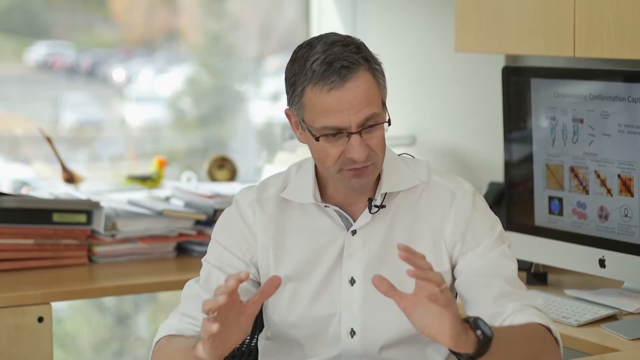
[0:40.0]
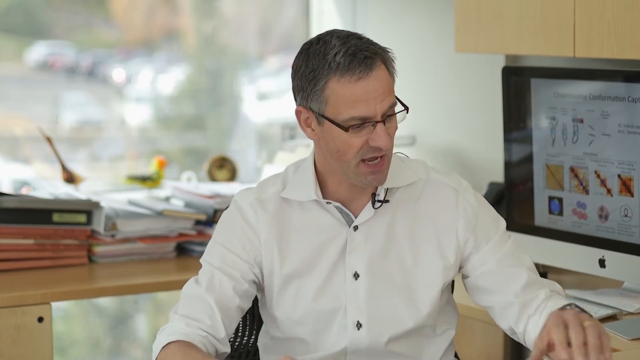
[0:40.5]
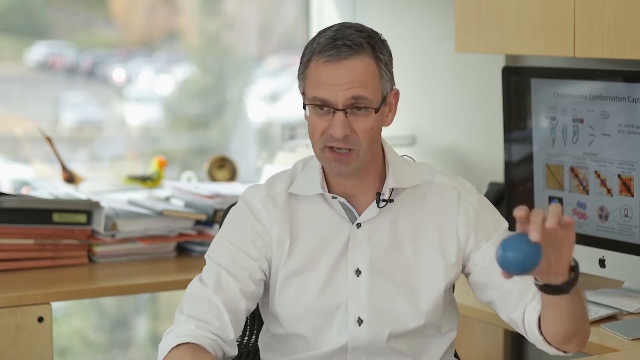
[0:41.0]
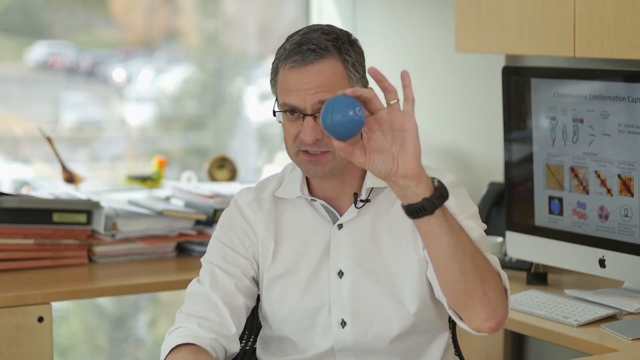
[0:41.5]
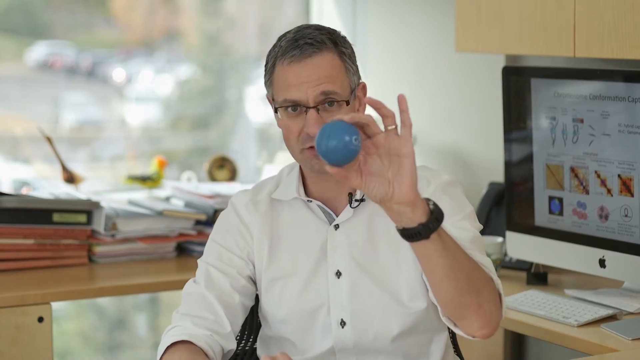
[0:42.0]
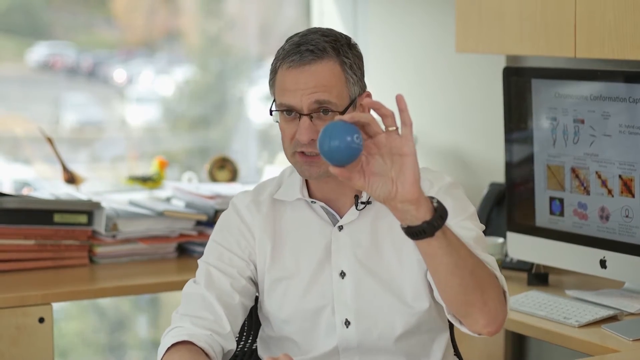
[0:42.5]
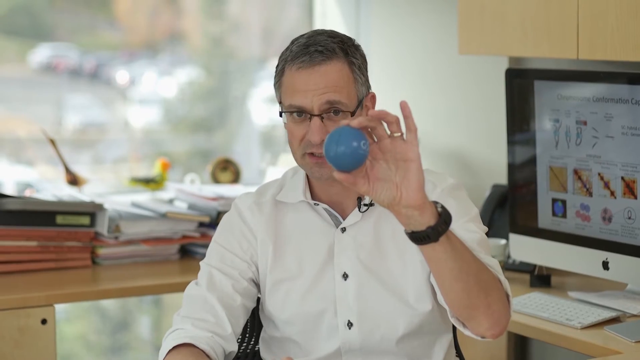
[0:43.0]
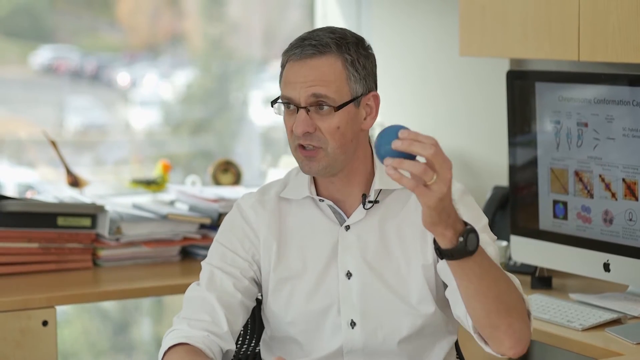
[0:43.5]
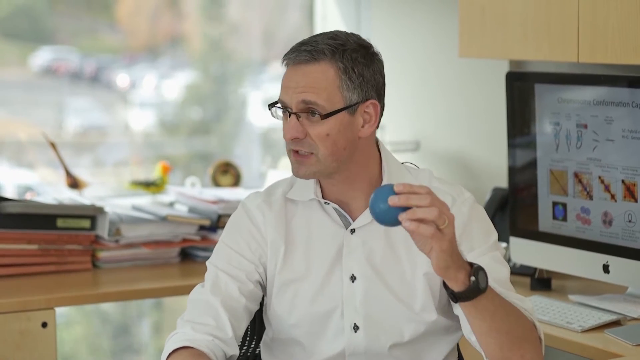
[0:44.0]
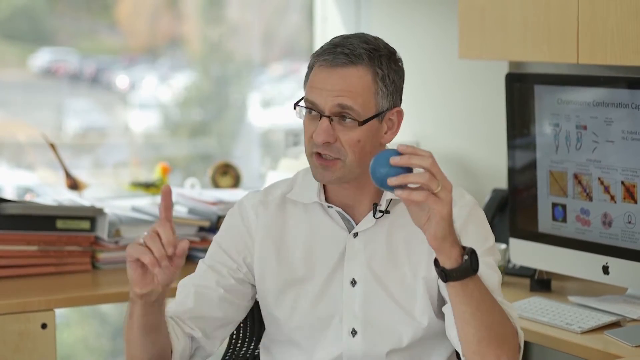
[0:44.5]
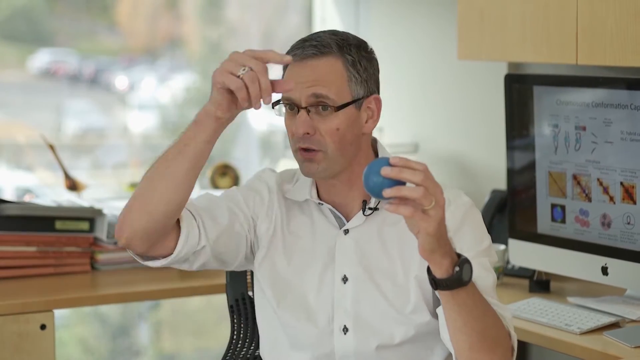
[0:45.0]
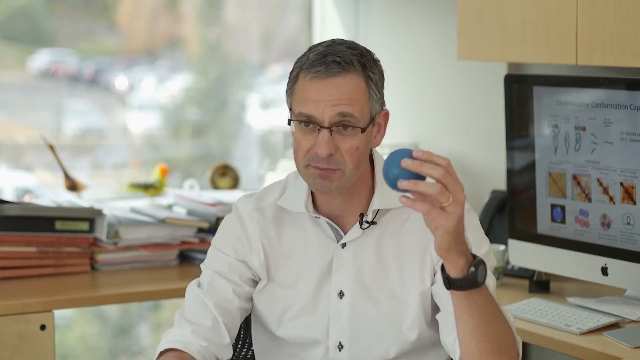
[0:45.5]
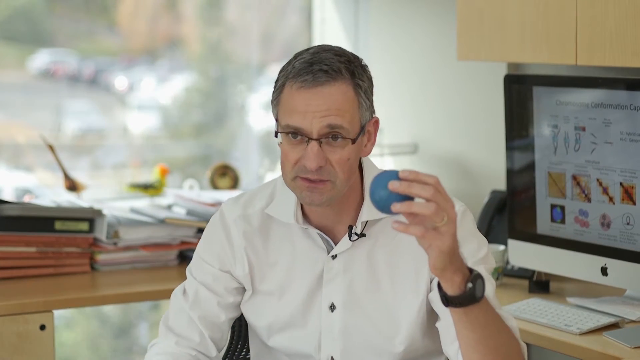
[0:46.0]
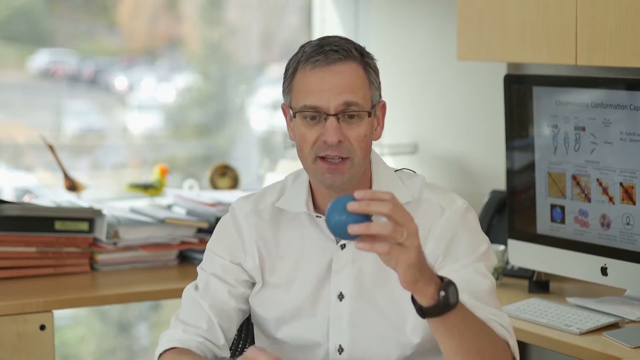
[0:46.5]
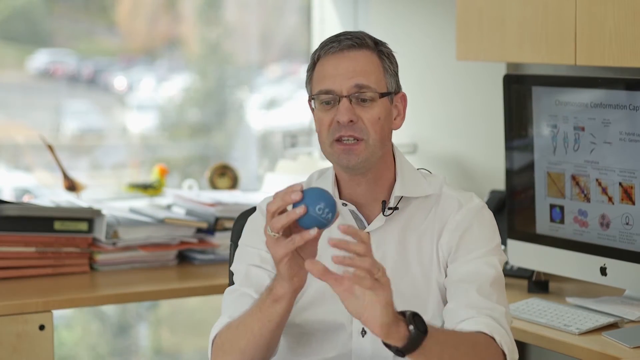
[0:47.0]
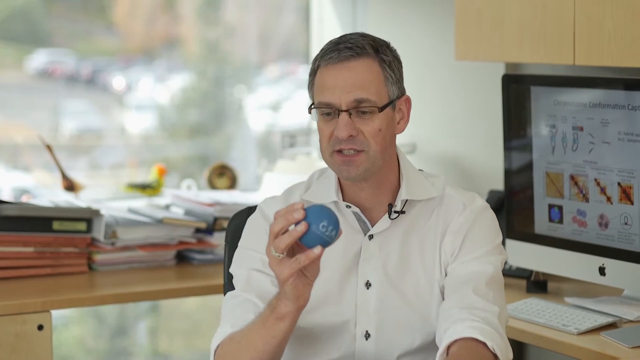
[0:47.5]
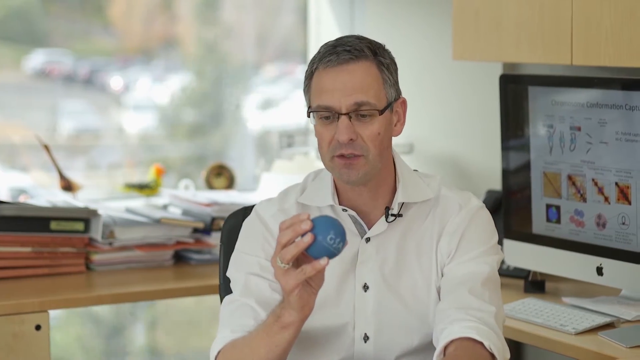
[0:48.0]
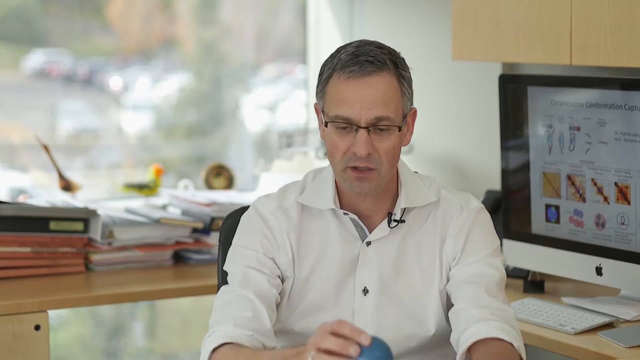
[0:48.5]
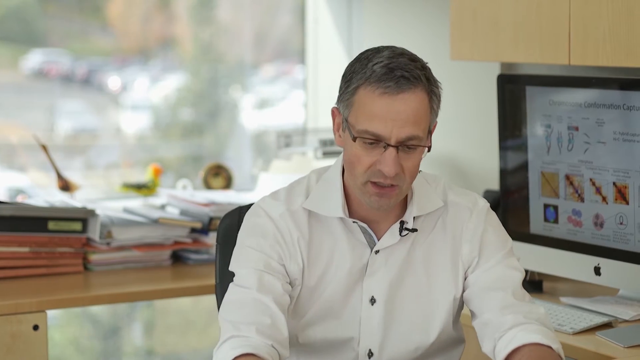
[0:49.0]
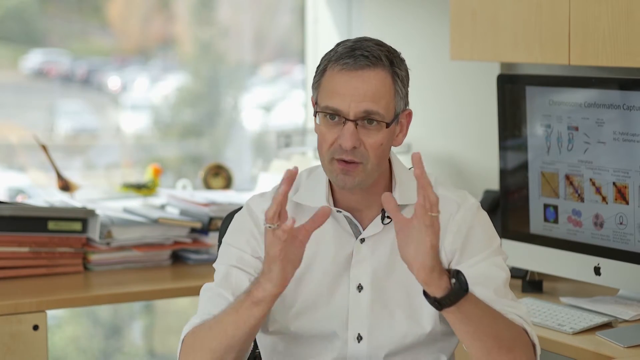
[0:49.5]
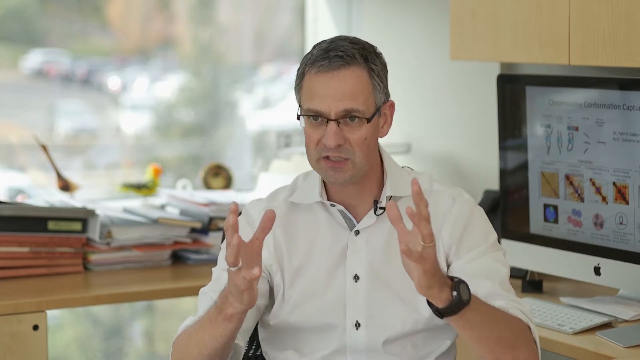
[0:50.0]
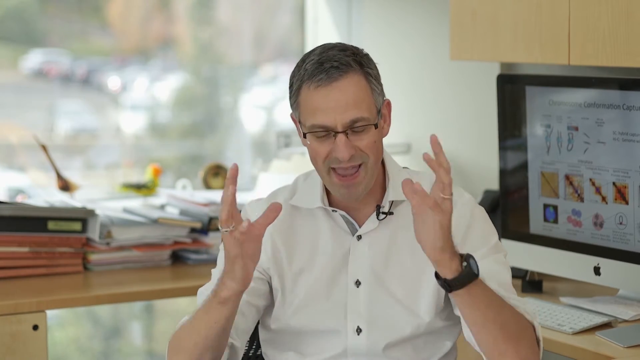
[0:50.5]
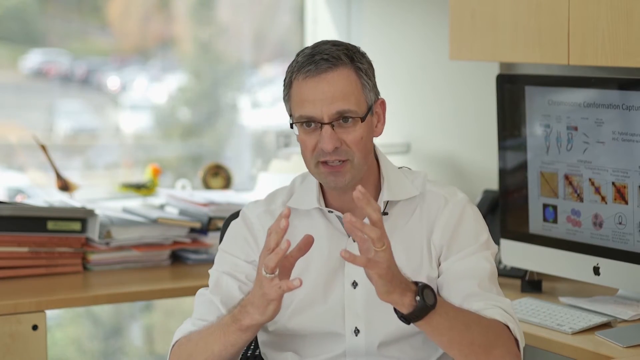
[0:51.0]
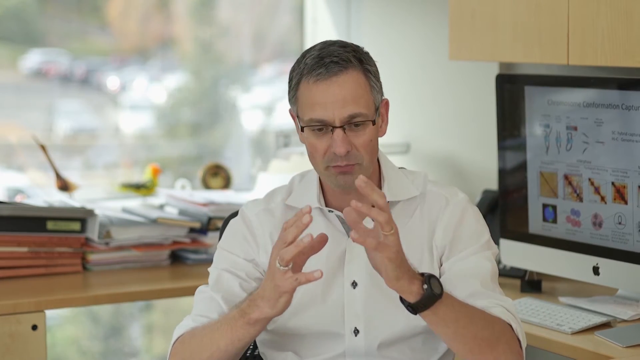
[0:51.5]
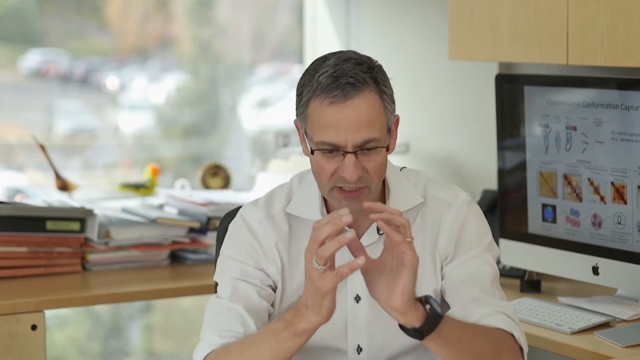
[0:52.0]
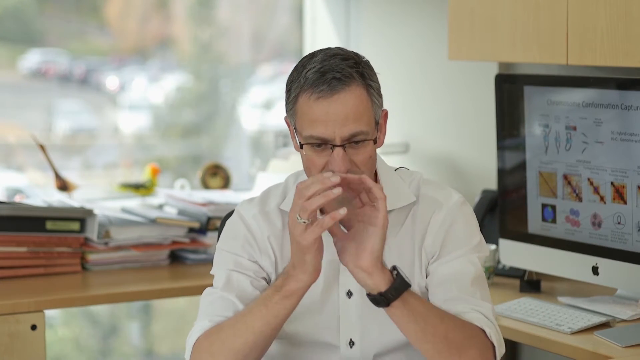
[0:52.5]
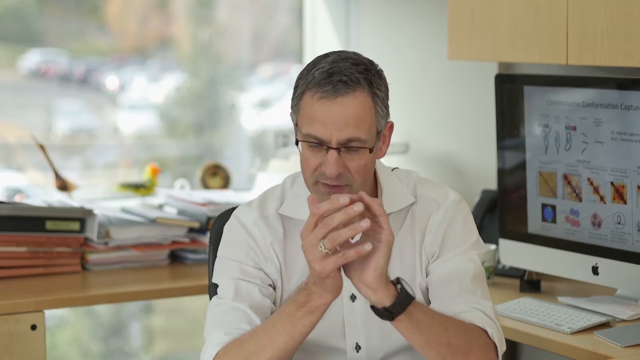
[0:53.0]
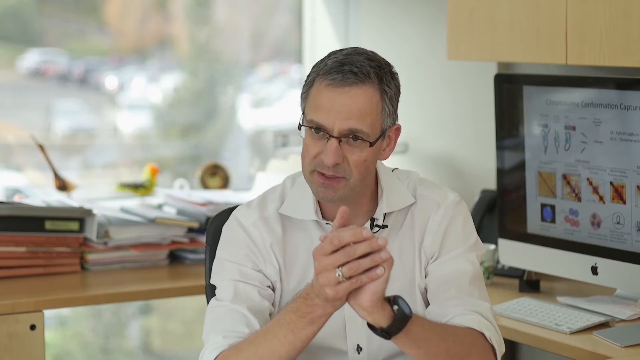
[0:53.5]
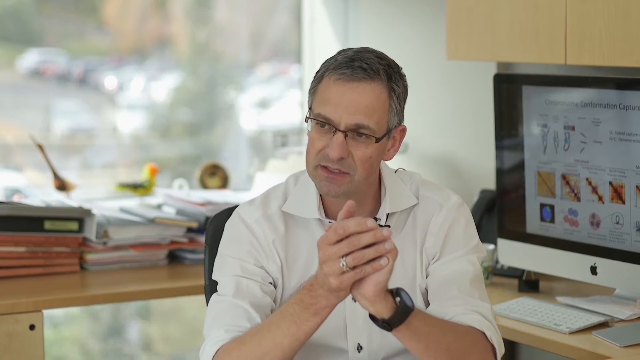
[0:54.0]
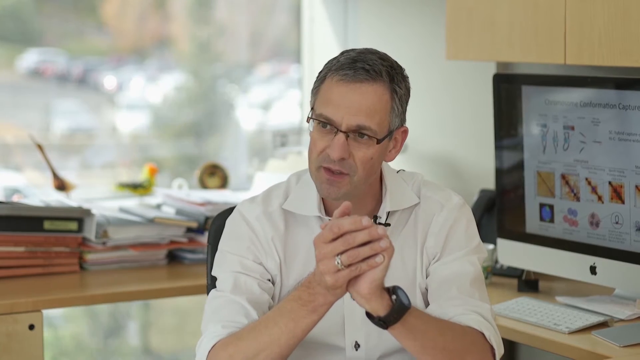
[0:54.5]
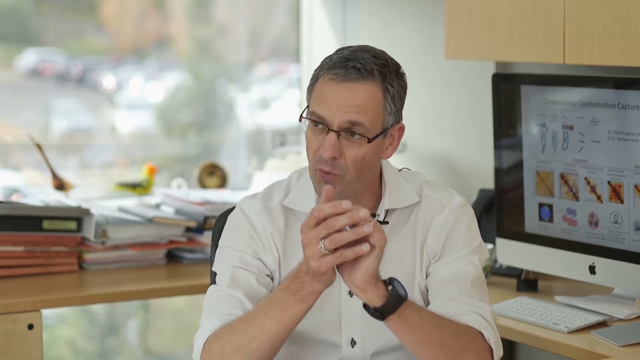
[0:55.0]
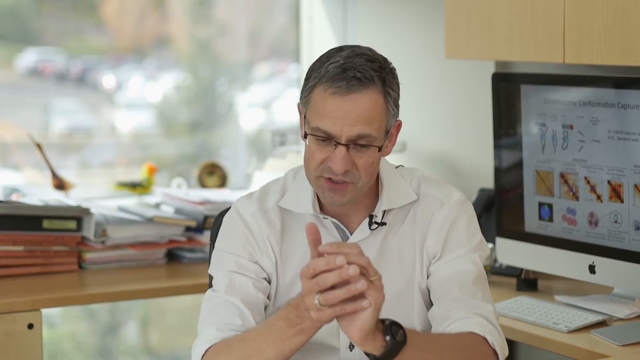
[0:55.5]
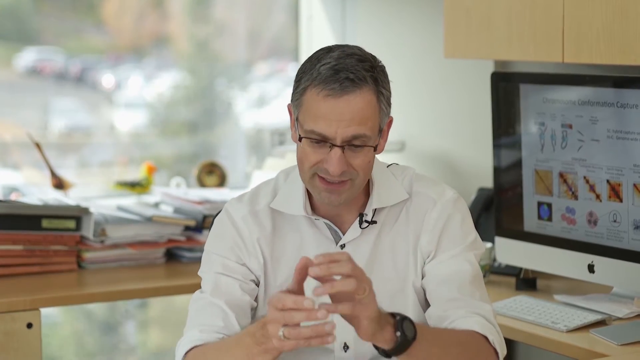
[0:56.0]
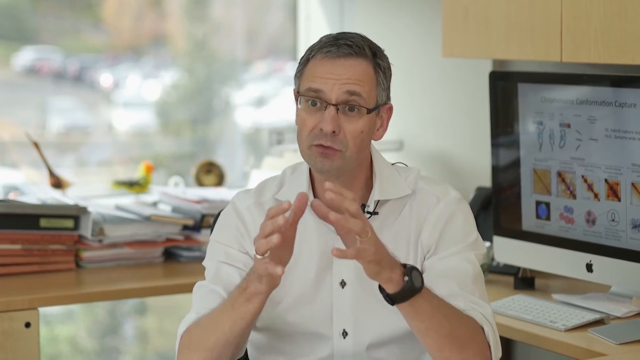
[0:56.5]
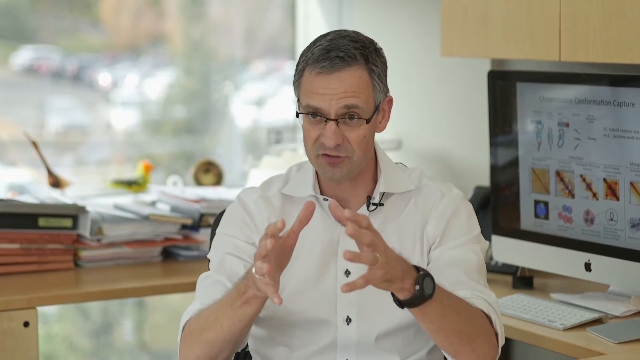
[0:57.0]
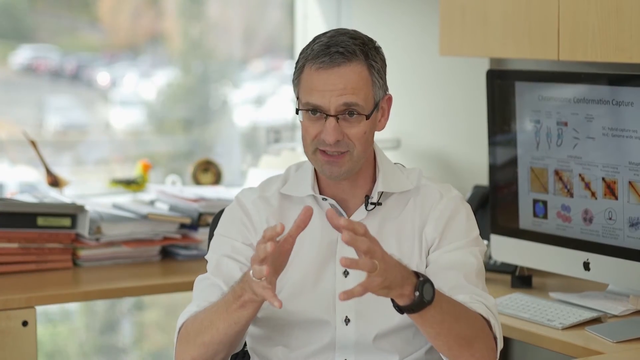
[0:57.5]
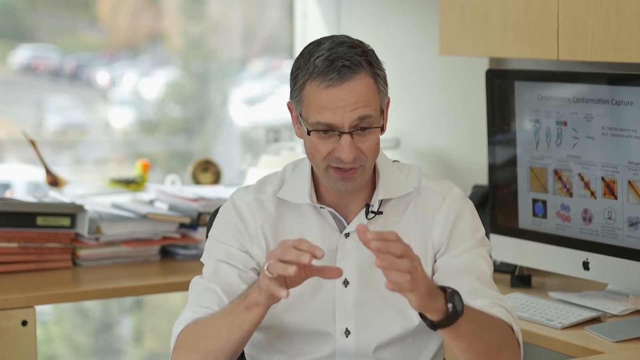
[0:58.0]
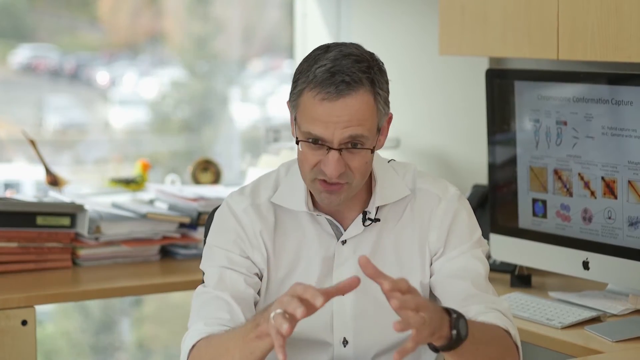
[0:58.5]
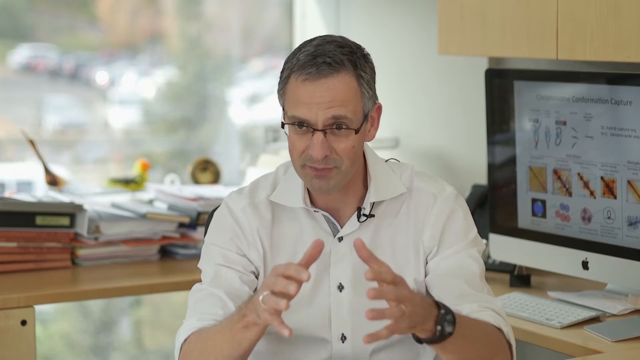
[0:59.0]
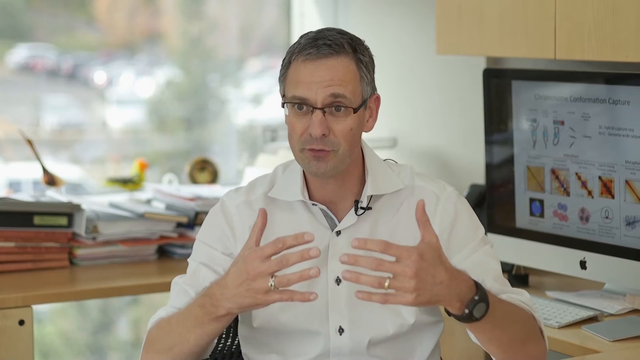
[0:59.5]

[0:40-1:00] The professor, in a white shirt and glasses and looking maybe 50 years old, talks with his hands. He possibly wears a microphone on his collar. He is sitting in his office at his desk, with a lot of books and other items on the desk. Outside is a parking lot, and a lot of sun comes through. He holds up a blue ball and makes a circular motion with his hand while still touching the ball. He then puts it down and keeps talking, making little circles with his hand, looking very expressive.